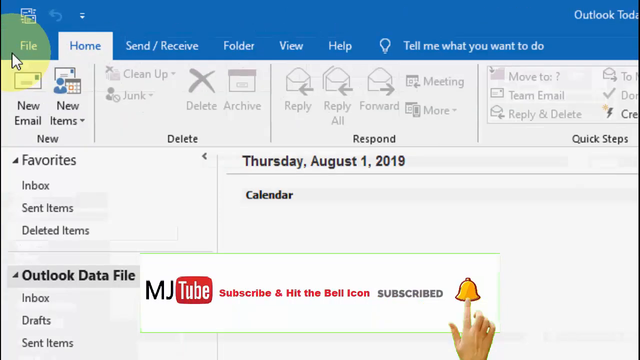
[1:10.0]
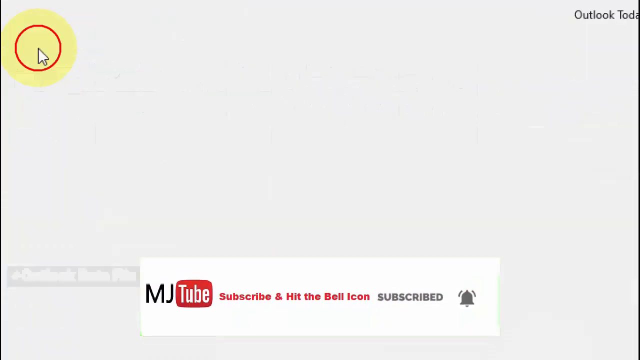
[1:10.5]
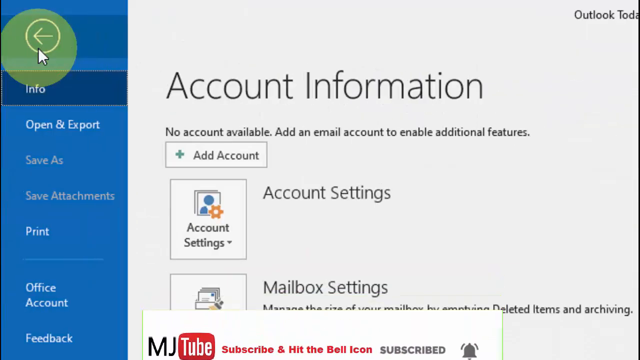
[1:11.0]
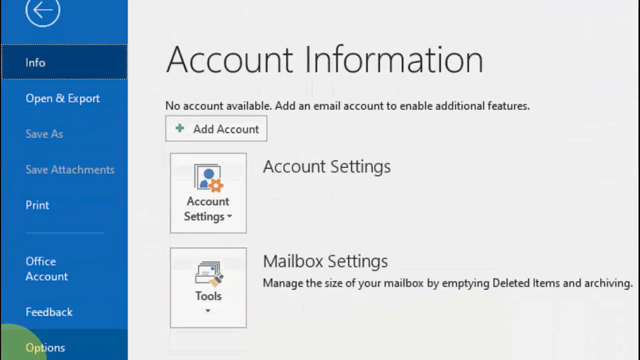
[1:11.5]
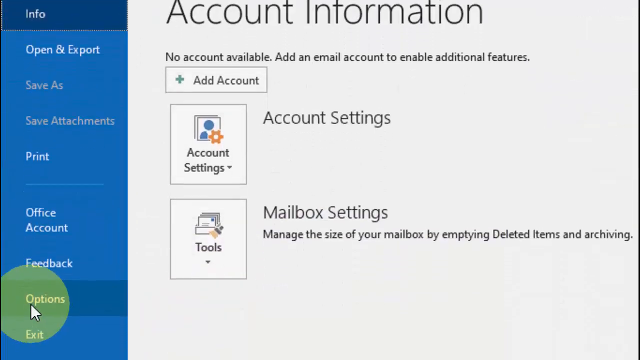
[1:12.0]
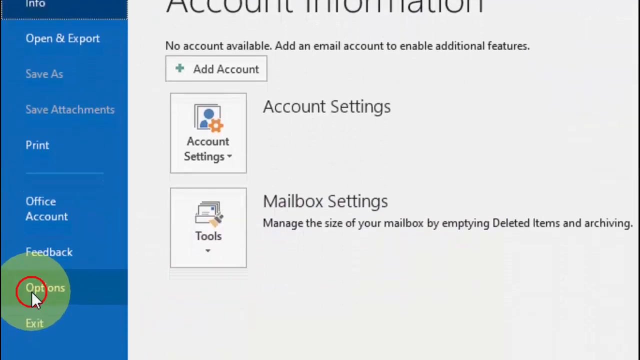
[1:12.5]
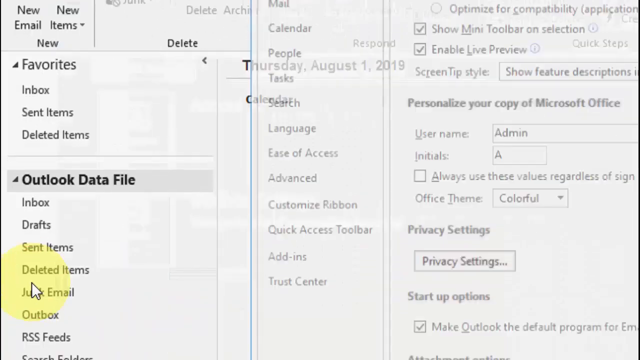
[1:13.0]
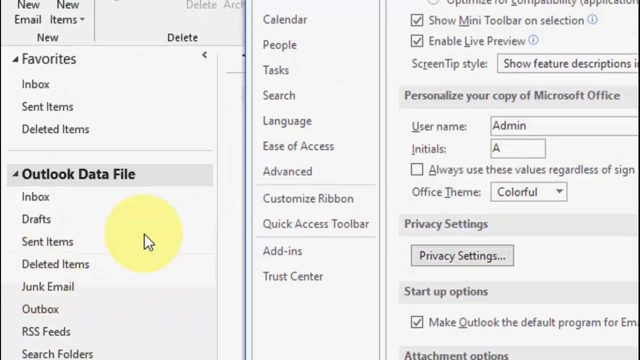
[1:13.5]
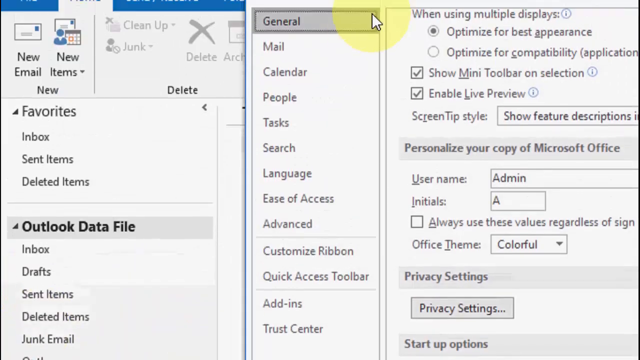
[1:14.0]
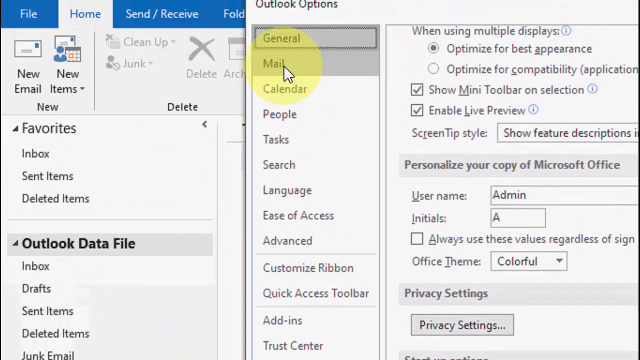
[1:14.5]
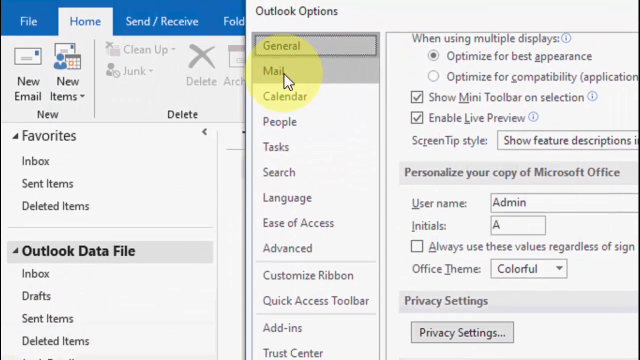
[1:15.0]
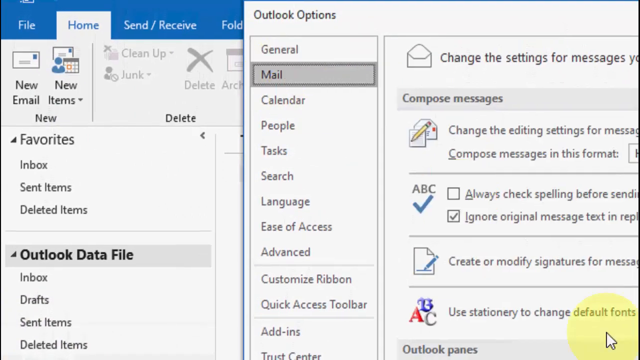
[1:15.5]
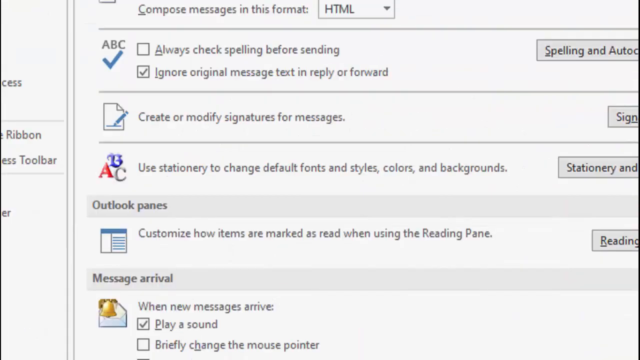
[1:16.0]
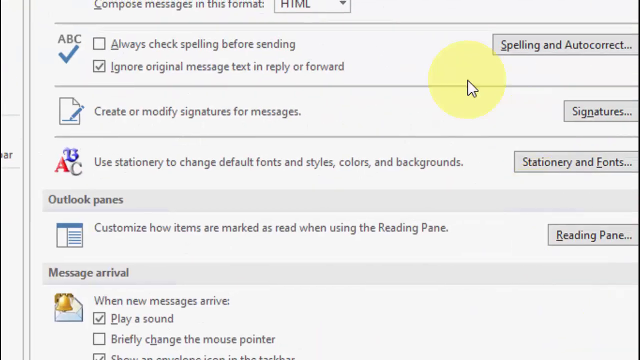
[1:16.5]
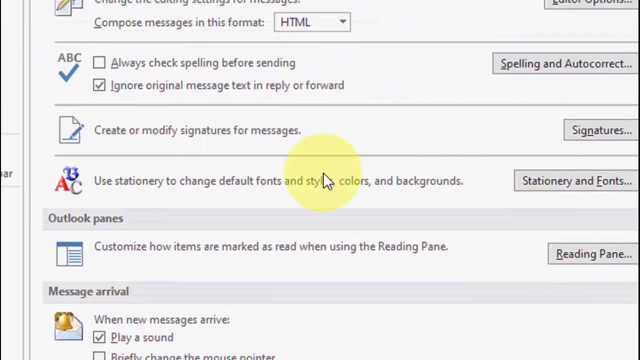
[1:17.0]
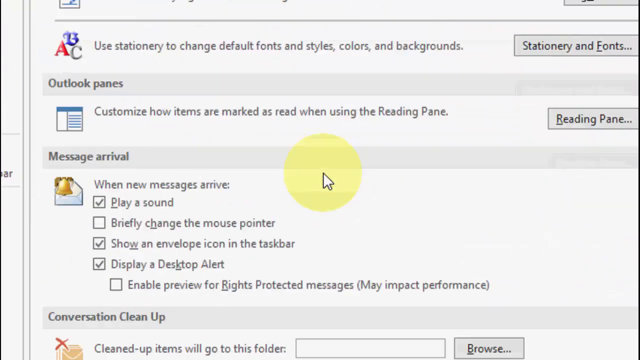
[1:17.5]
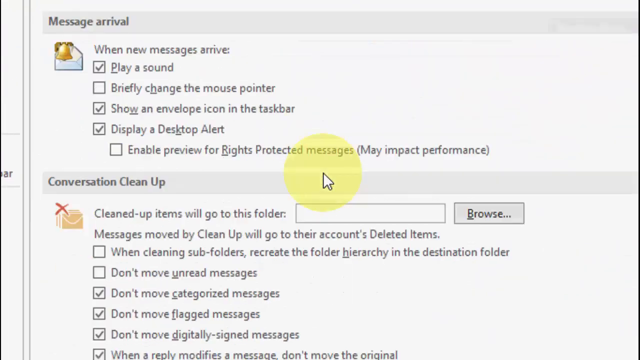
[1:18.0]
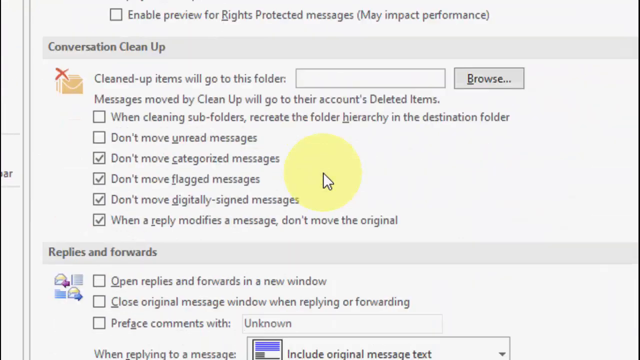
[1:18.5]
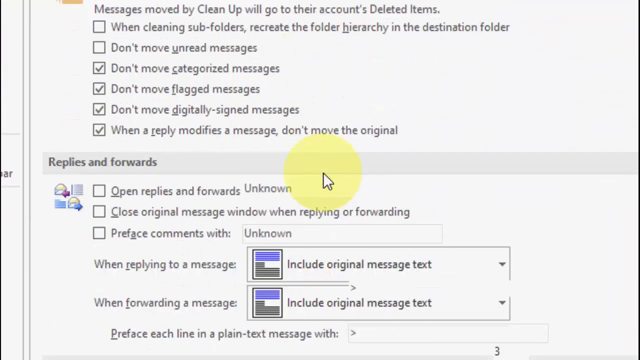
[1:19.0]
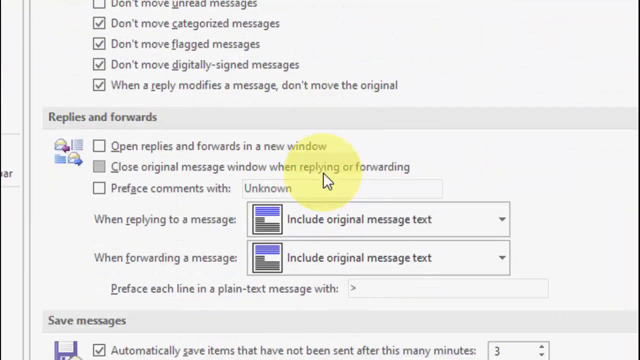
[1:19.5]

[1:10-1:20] Outlook is open on the screen, with an ad for MJtube at the bottom. The mouse icon, with a yellow highlighted area around it, is at the top left near File. It clicks on File, which brings up another page that it begins scrolling down, showing "Account Information". It clicks, then goes all the way to the top and clicks on Mail. After clicking Mail, it scrolls down, revealing several more options at the very bottom of the page.